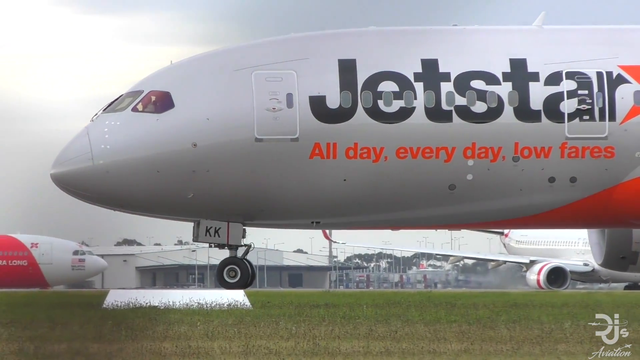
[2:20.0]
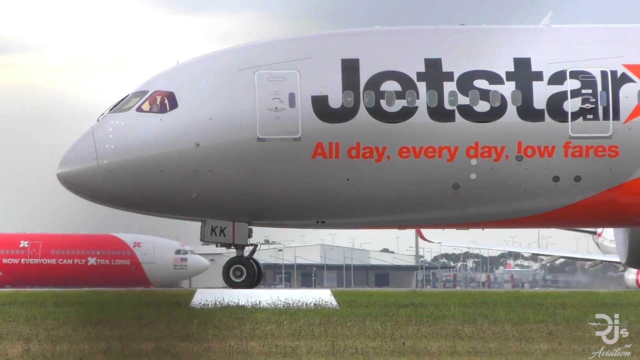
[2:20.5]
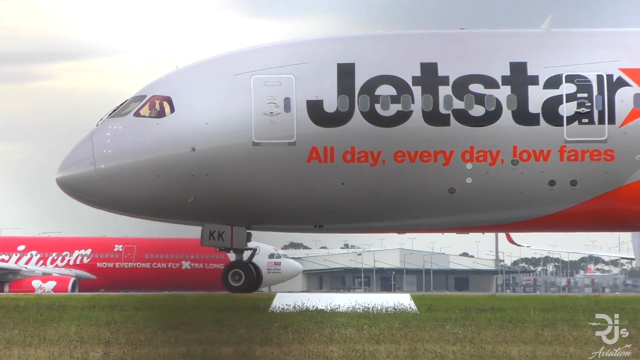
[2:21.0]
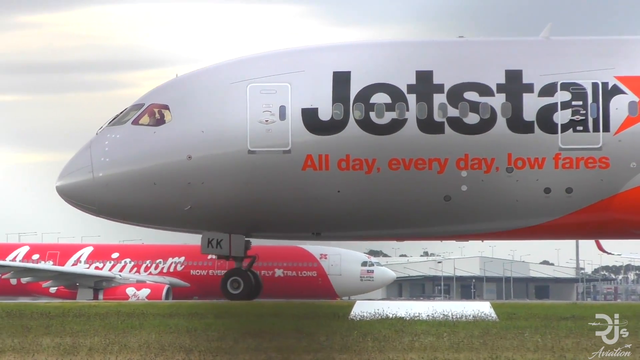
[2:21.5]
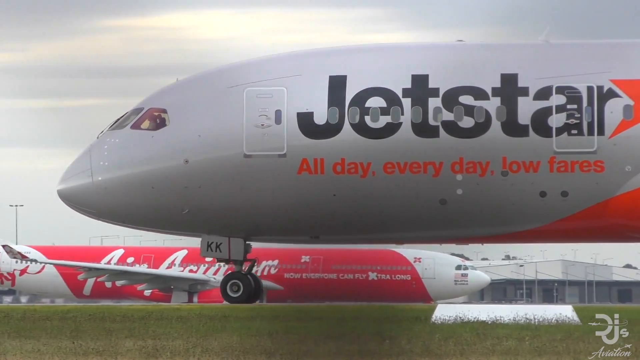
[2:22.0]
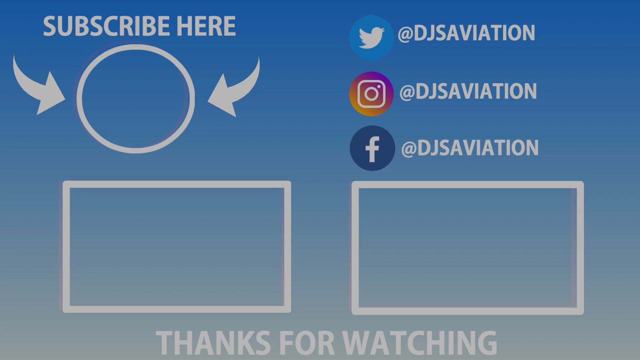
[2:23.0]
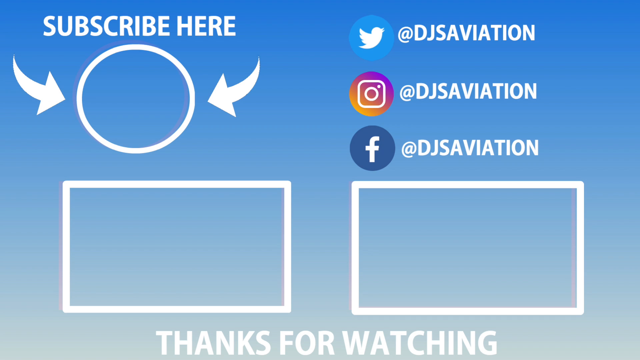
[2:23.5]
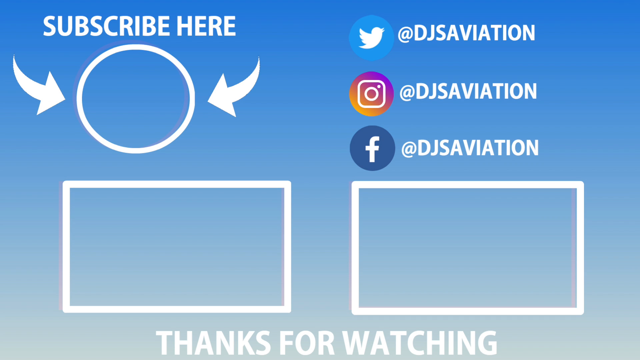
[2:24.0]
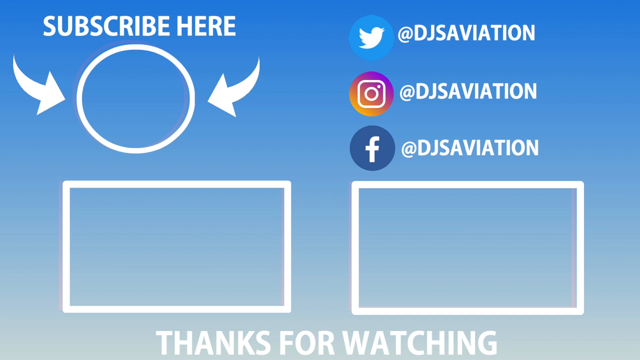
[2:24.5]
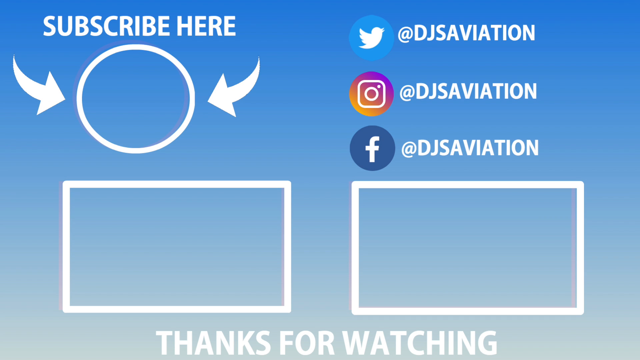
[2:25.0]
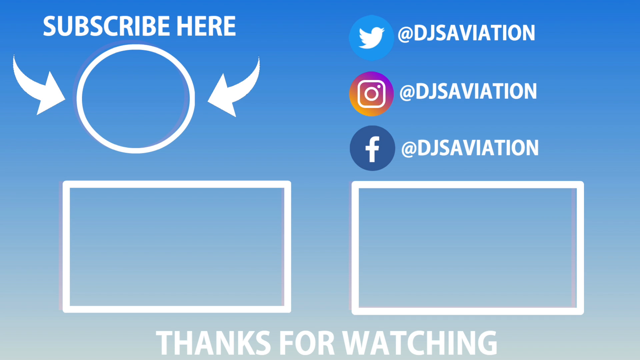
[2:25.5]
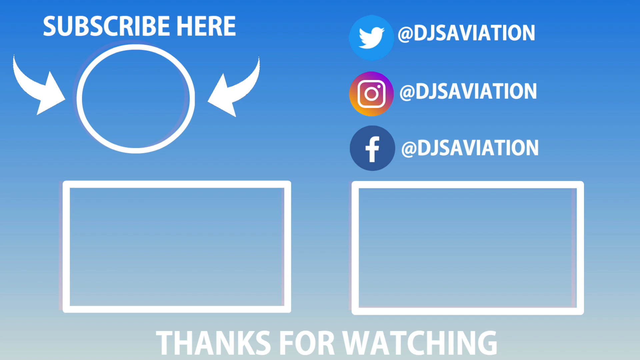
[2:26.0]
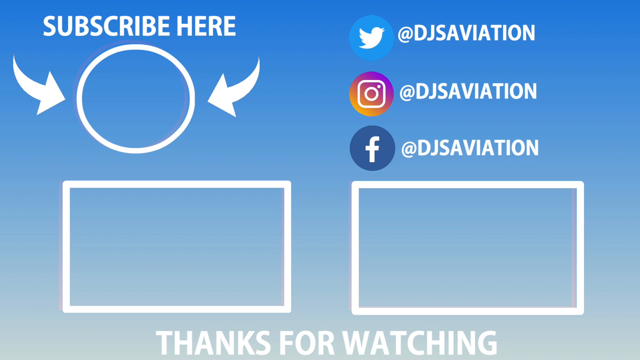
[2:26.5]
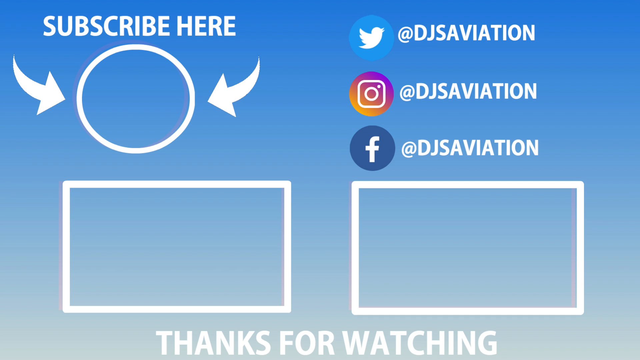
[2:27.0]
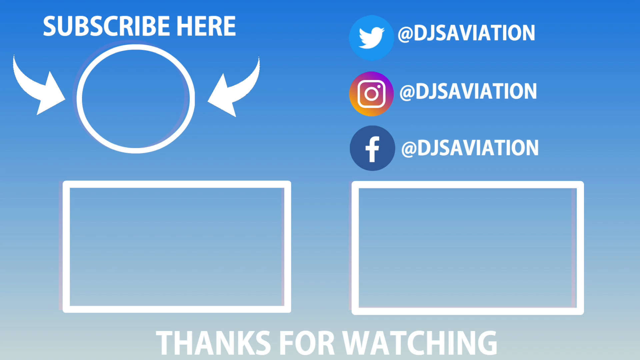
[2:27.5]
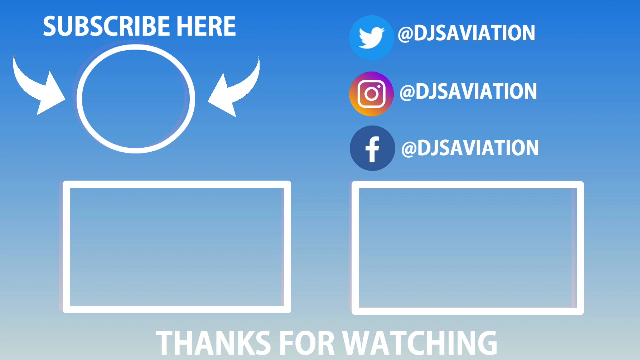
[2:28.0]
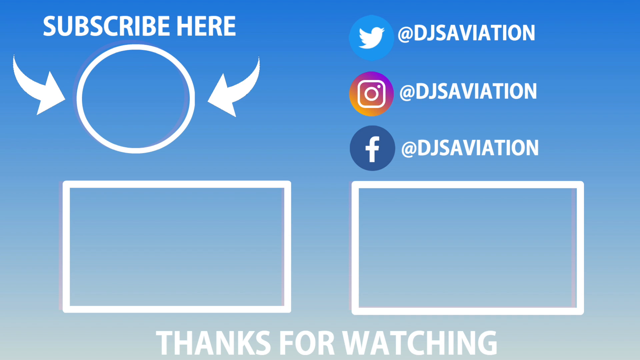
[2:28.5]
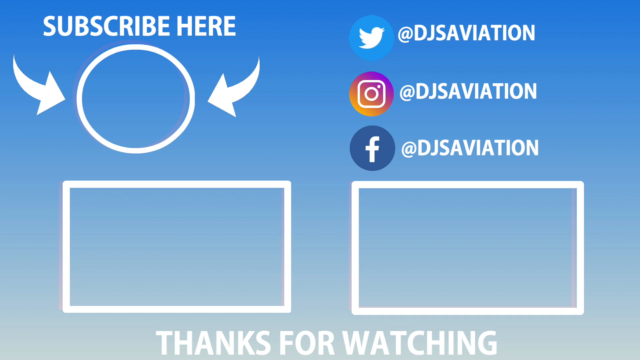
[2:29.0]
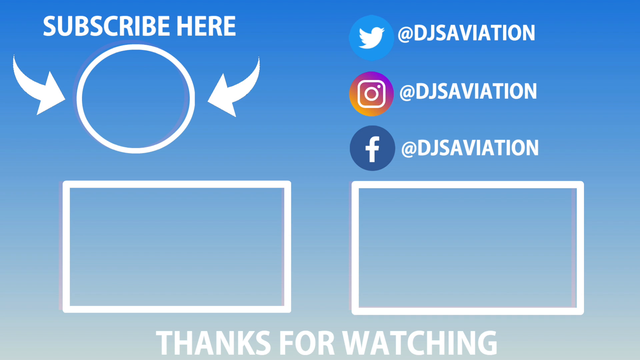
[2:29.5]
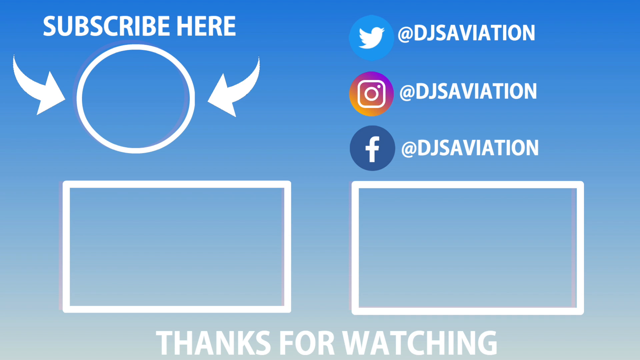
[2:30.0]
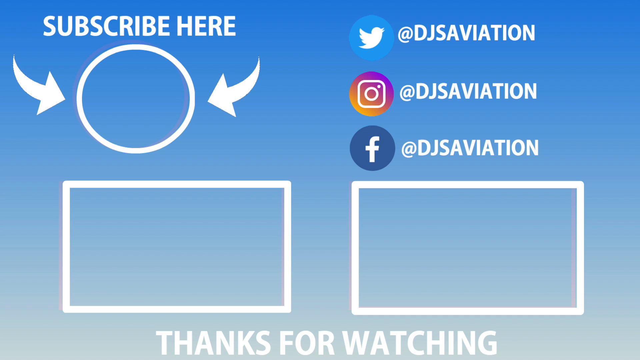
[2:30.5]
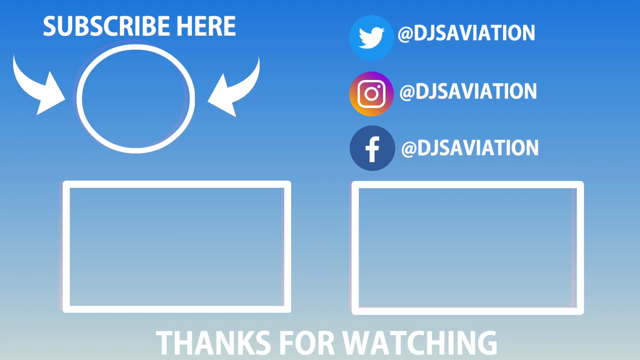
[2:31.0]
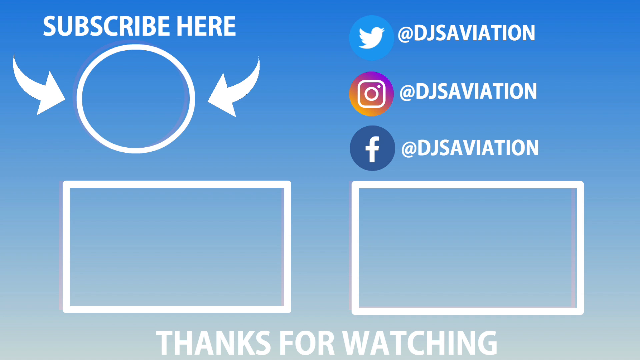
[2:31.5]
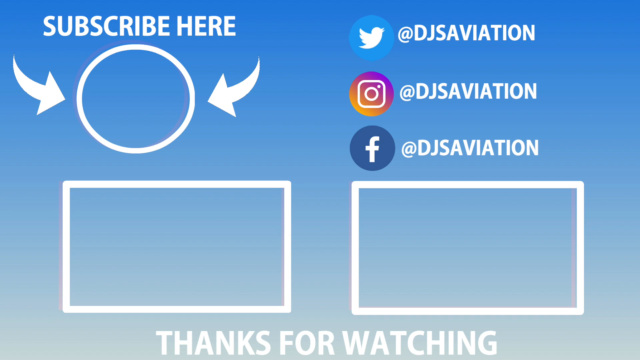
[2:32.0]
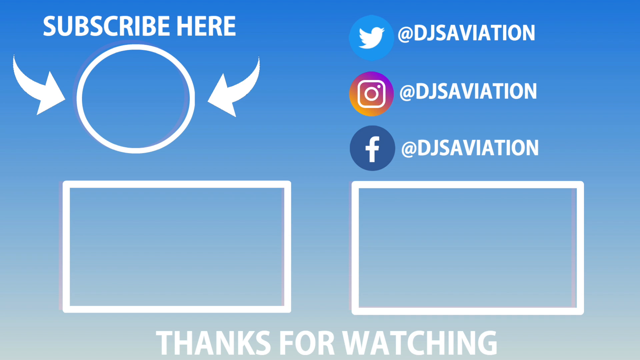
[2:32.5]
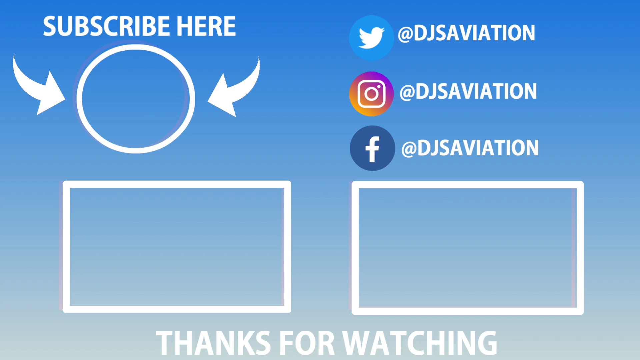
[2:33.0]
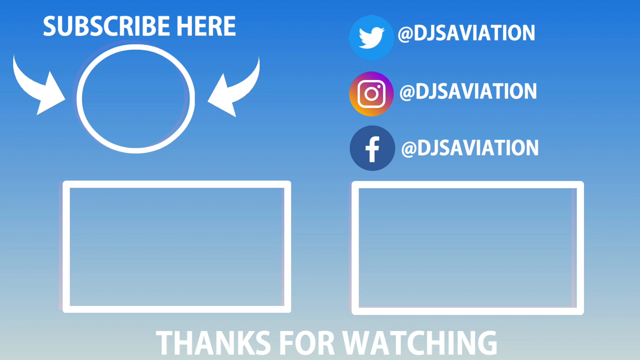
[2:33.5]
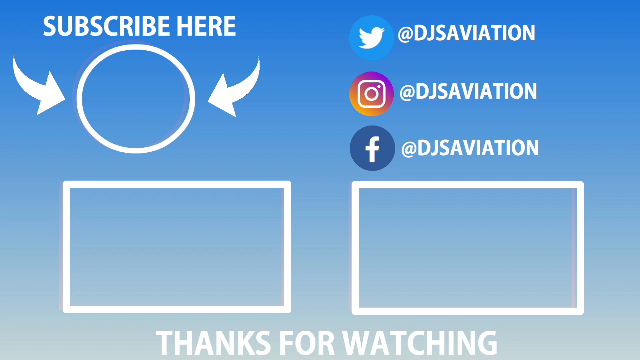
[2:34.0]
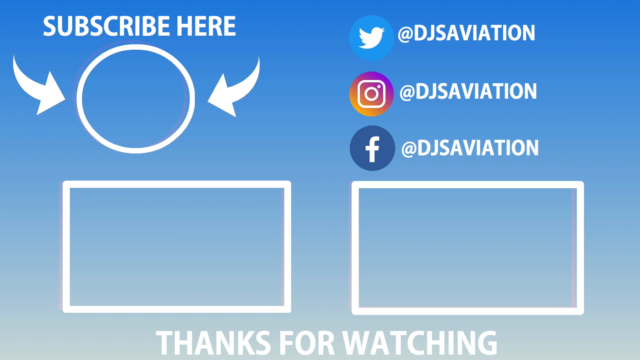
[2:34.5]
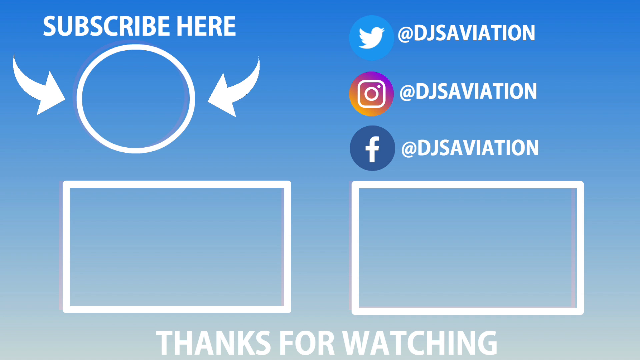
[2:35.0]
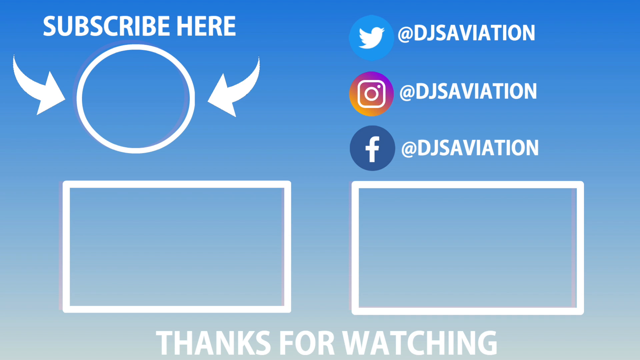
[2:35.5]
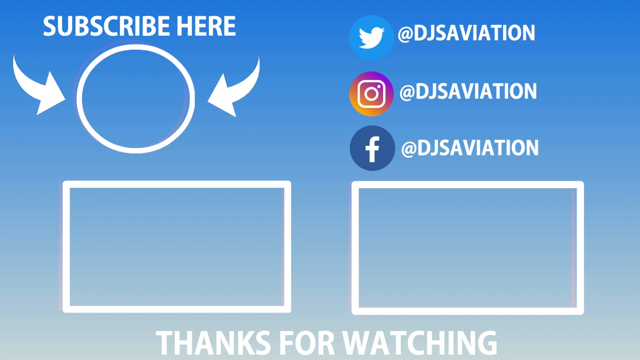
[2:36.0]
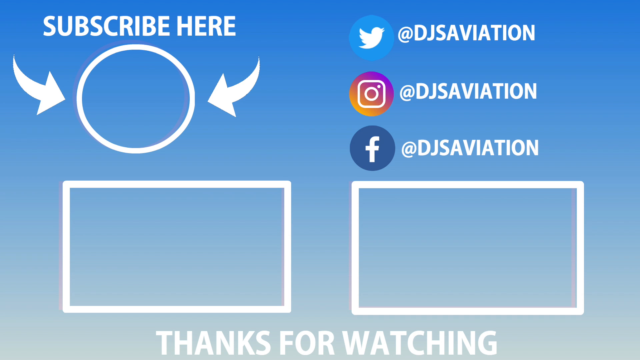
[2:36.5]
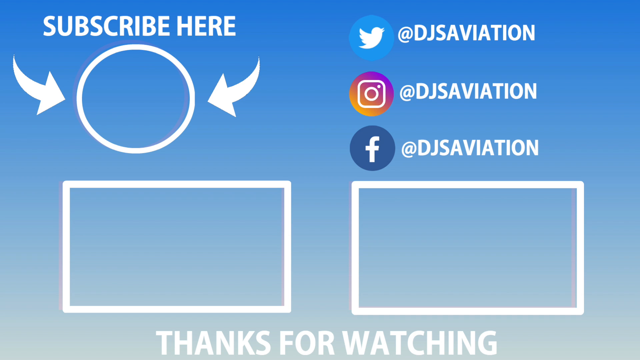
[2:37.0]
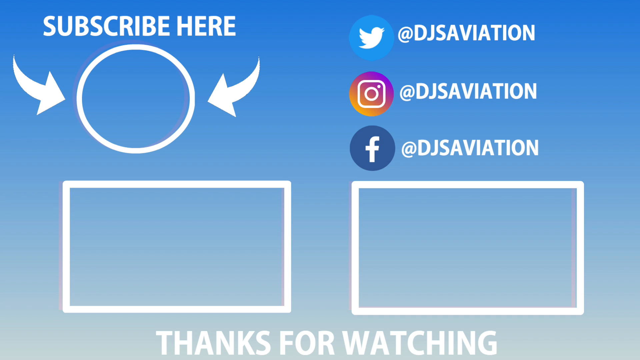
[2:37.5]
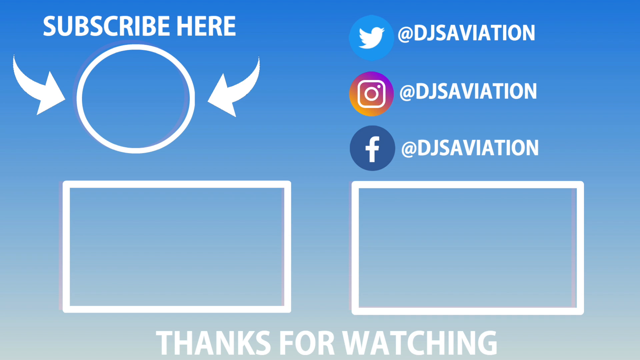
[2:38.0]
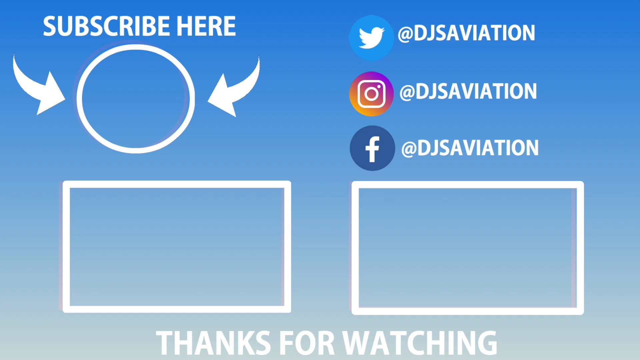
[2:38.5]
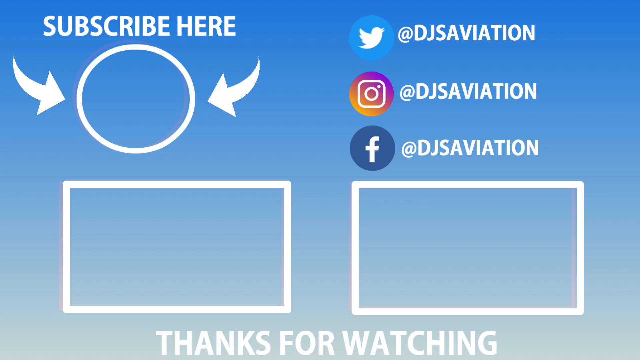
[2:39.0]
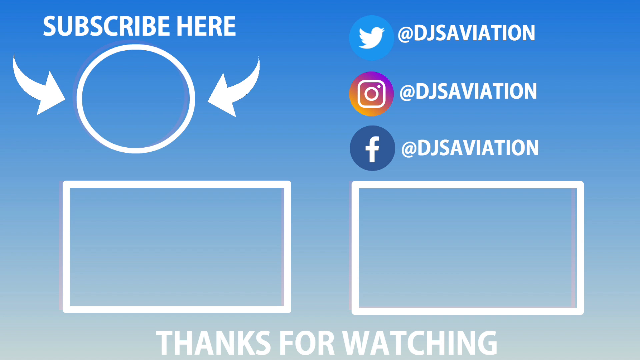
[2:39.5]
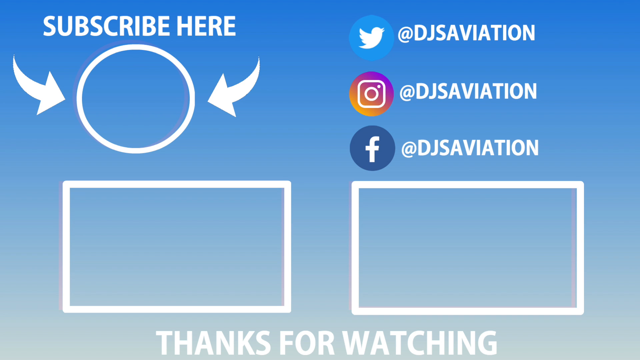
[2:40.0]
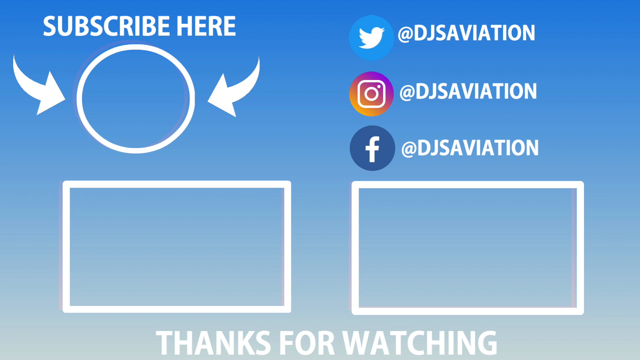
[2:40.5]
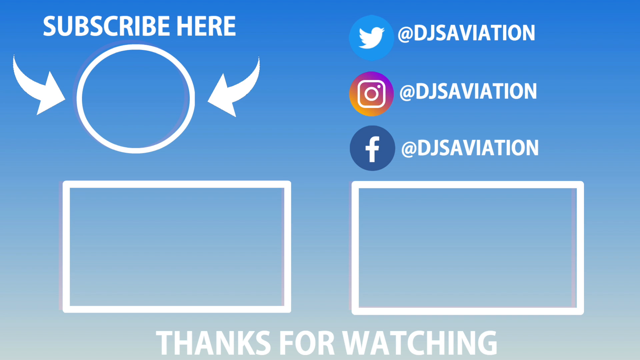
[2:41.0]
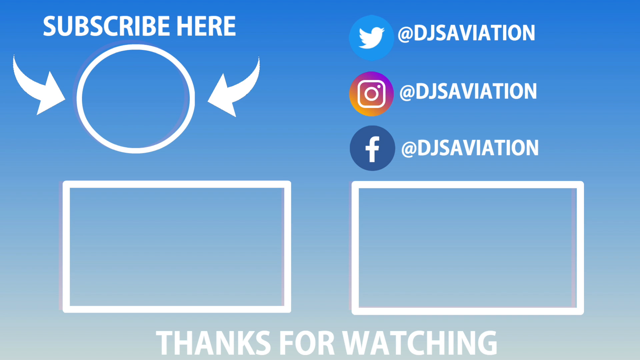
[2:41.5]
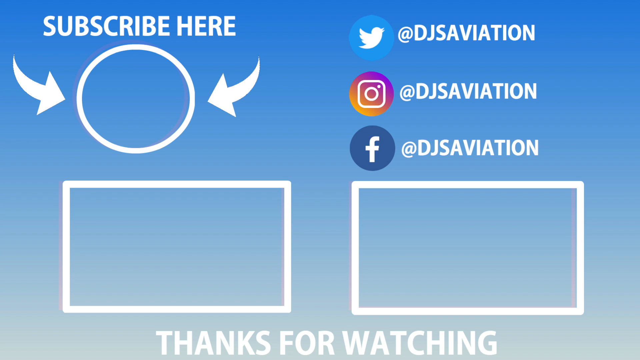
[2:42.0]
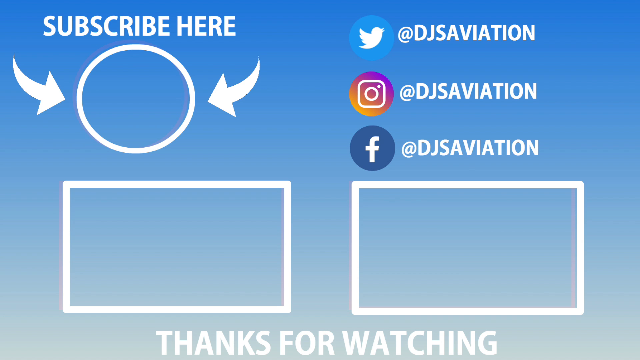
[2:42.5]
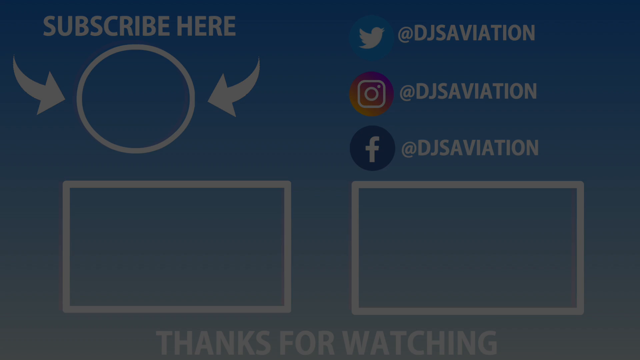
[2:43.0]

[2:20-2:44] The Jetstar airplane, having landed, comes to a stop and appears to finally stop. A self-promotion page for the channel then appears for a long time: on a blue background, the top says "subscribe here." There are two arrows pointing at a circle and two squares with a white outline at the bottom. At the top right, Twitter information is listed as DJ's Aviation, and Instagram and Facebook are also listed as DJ's Aviation.